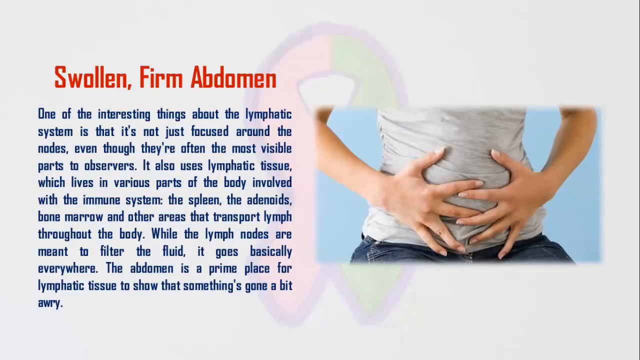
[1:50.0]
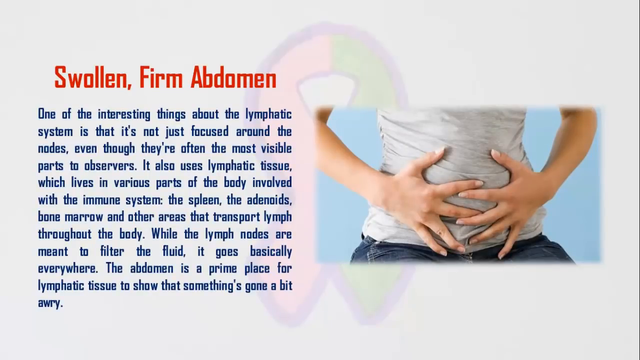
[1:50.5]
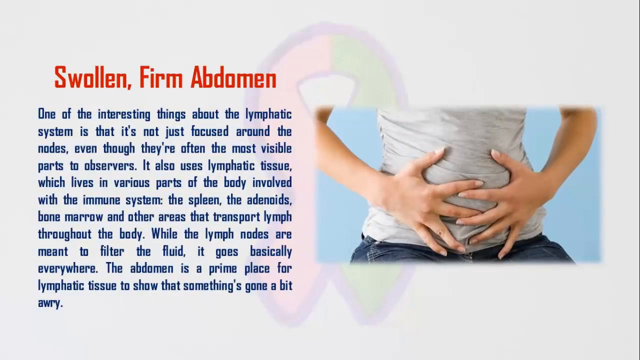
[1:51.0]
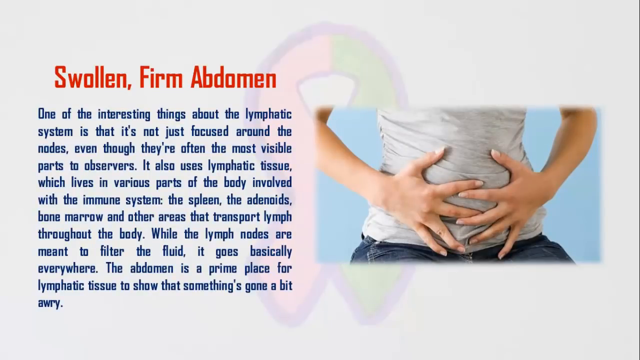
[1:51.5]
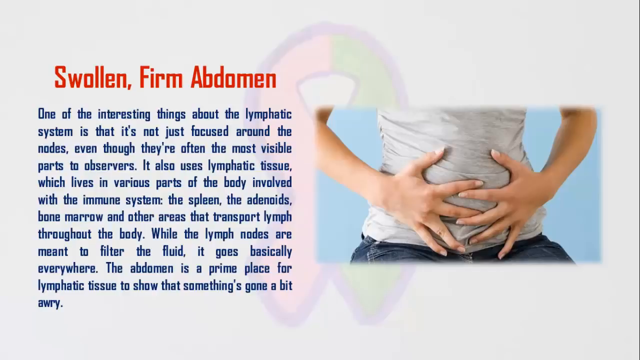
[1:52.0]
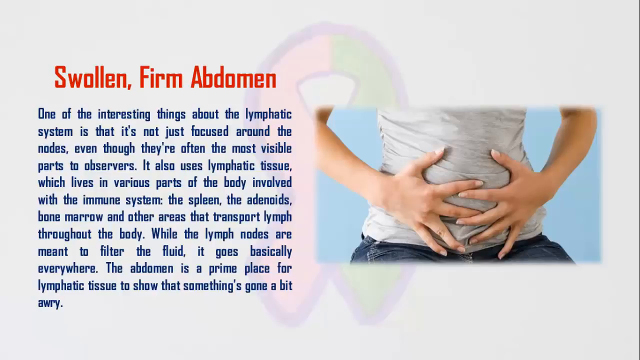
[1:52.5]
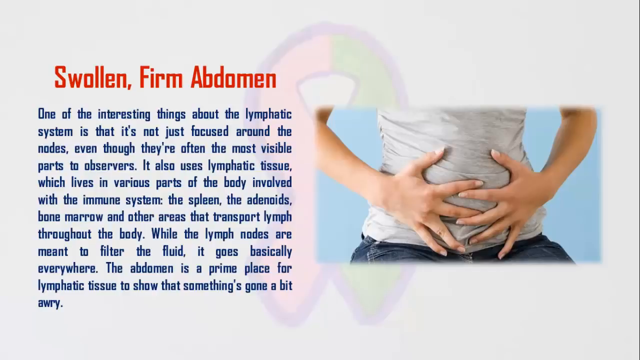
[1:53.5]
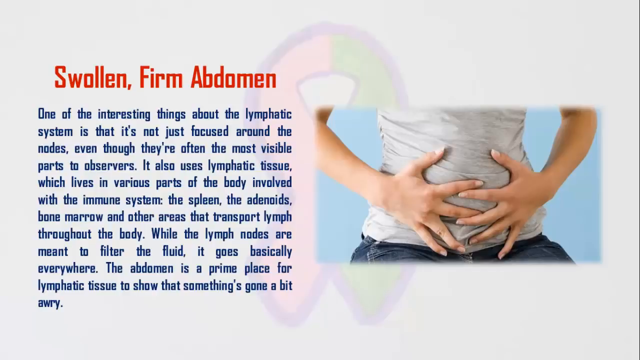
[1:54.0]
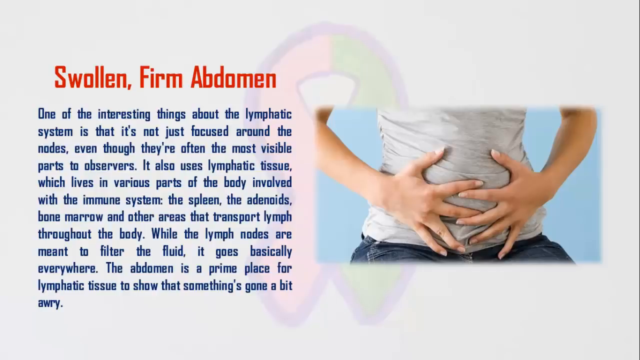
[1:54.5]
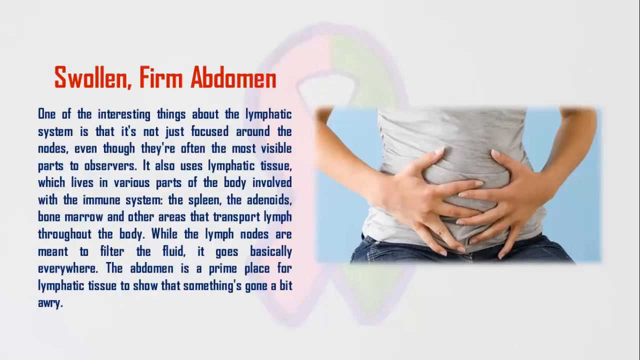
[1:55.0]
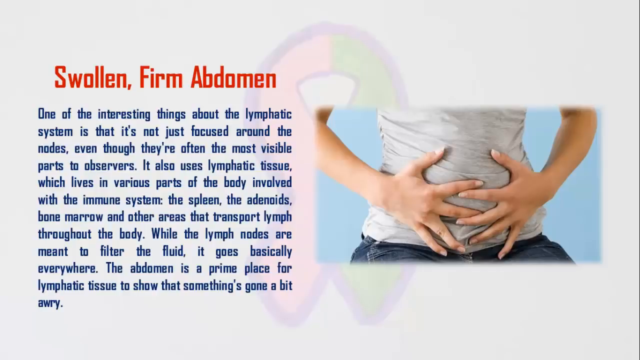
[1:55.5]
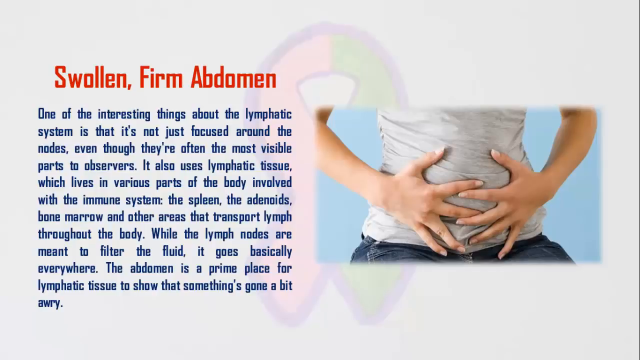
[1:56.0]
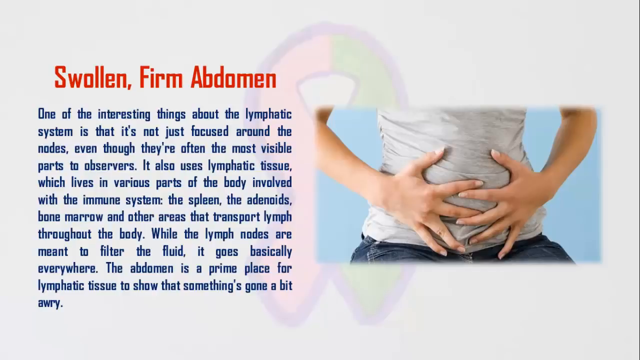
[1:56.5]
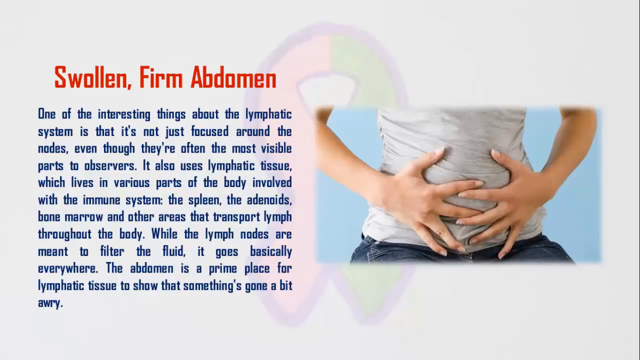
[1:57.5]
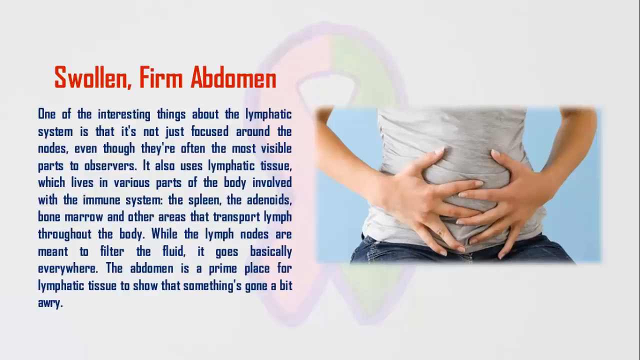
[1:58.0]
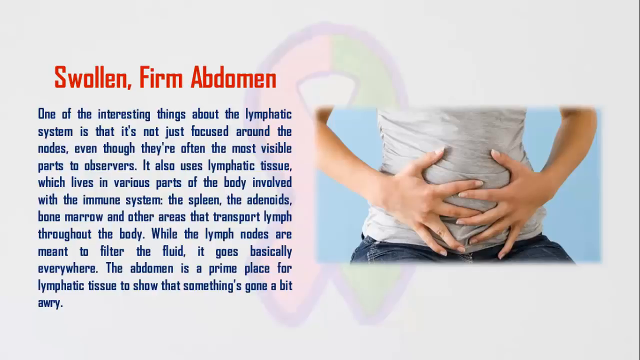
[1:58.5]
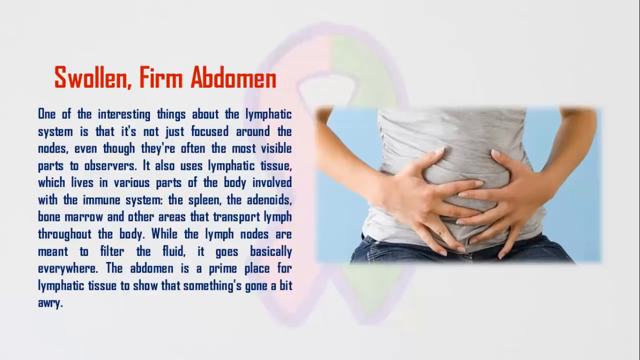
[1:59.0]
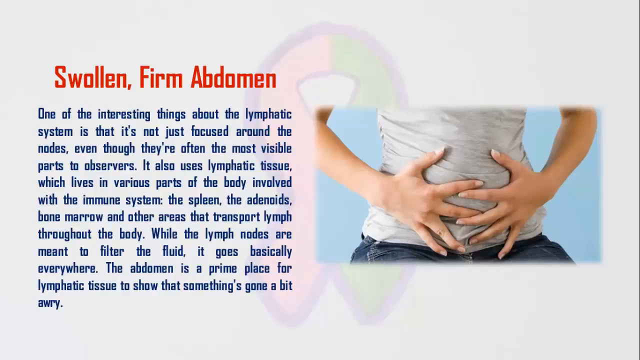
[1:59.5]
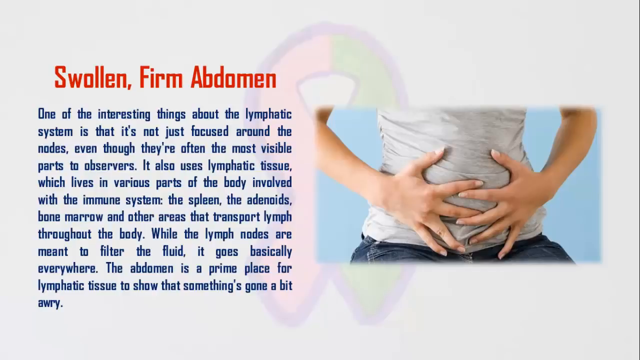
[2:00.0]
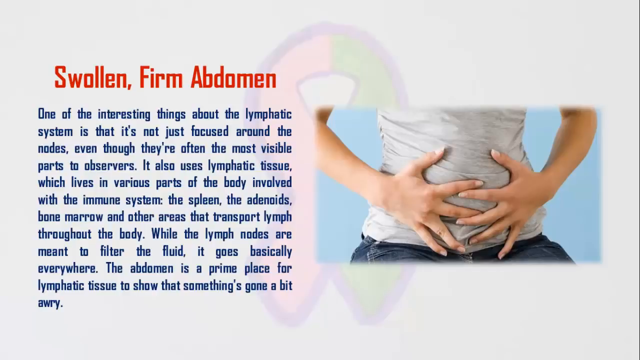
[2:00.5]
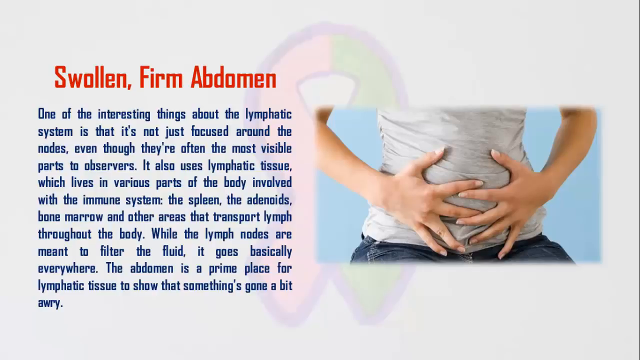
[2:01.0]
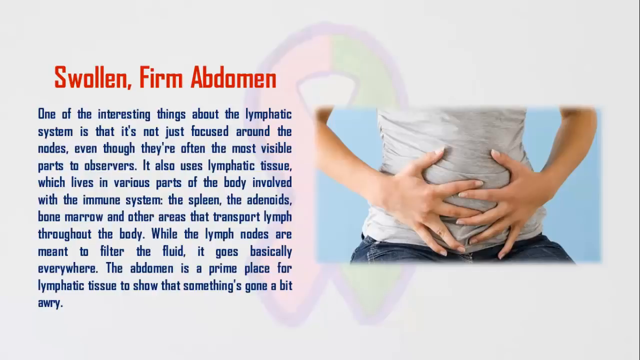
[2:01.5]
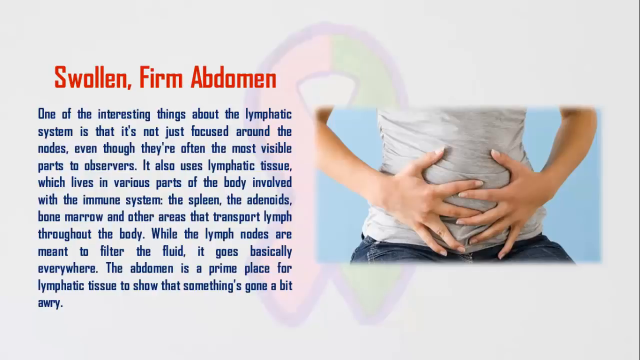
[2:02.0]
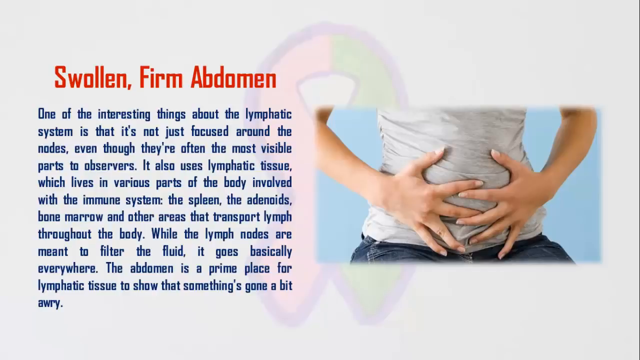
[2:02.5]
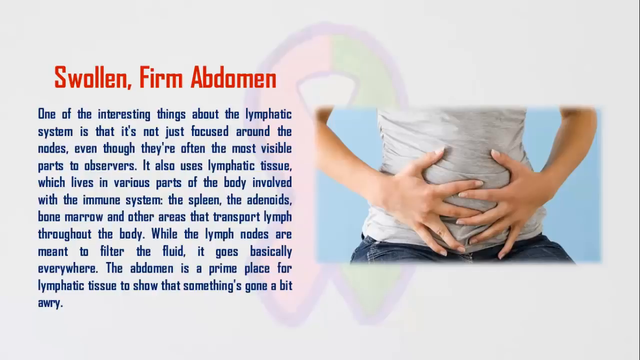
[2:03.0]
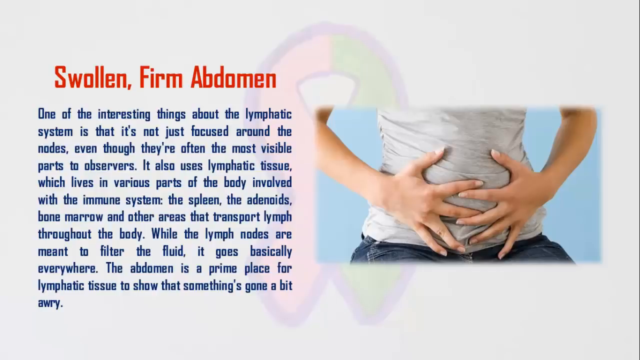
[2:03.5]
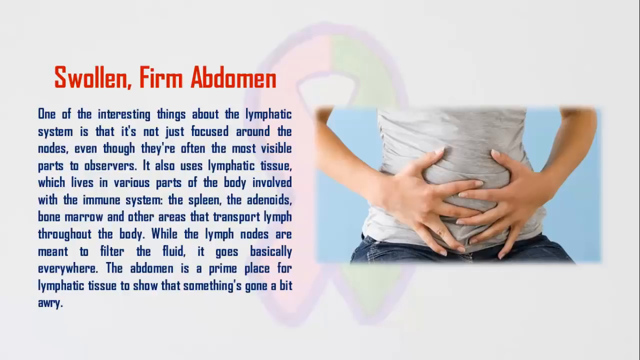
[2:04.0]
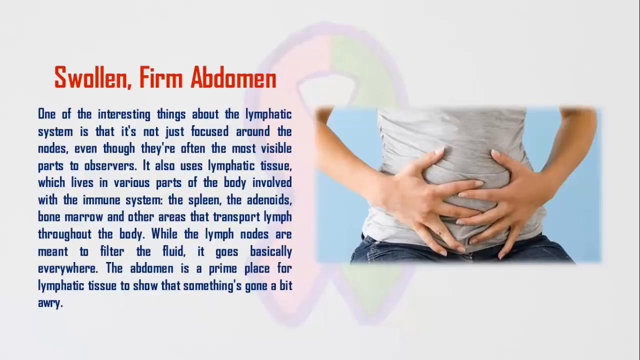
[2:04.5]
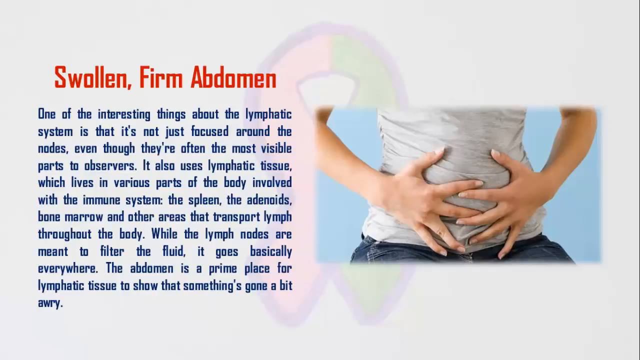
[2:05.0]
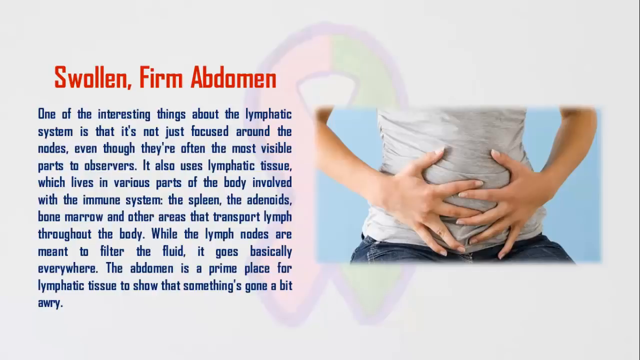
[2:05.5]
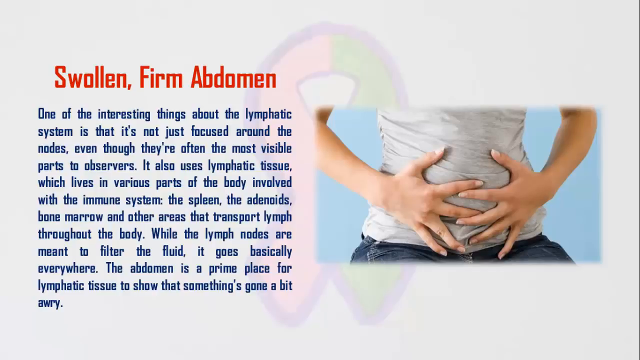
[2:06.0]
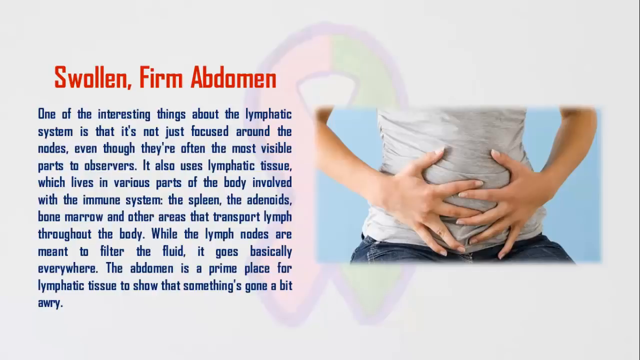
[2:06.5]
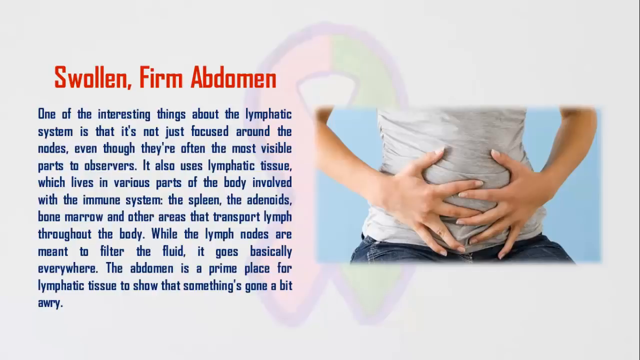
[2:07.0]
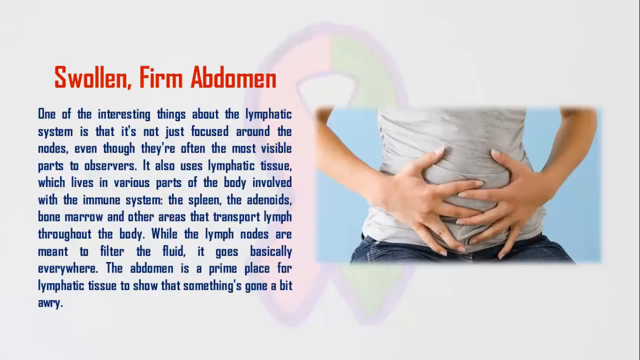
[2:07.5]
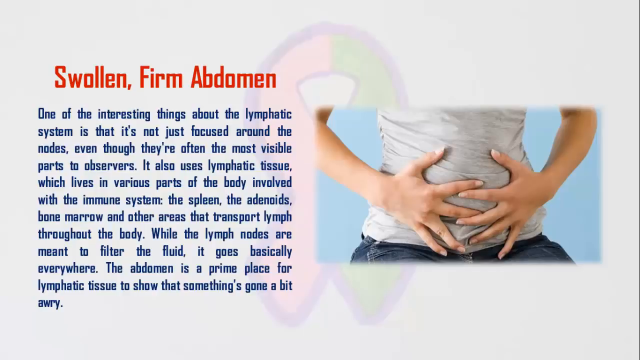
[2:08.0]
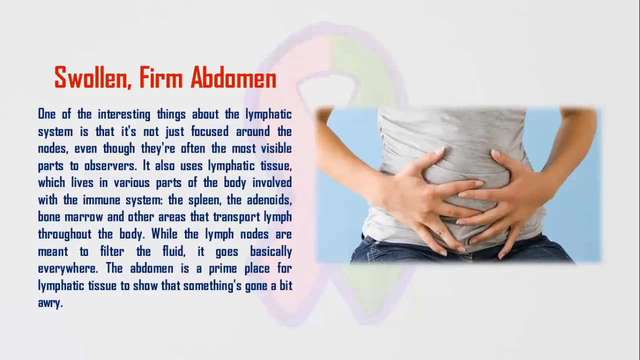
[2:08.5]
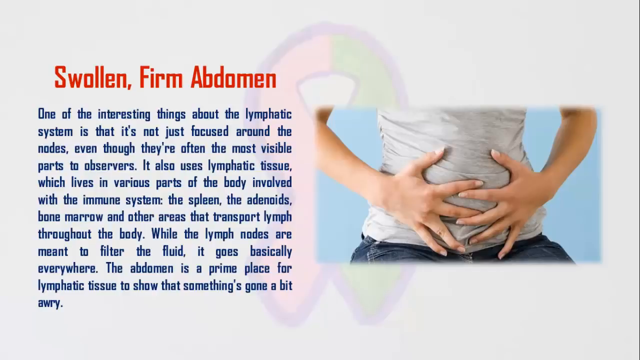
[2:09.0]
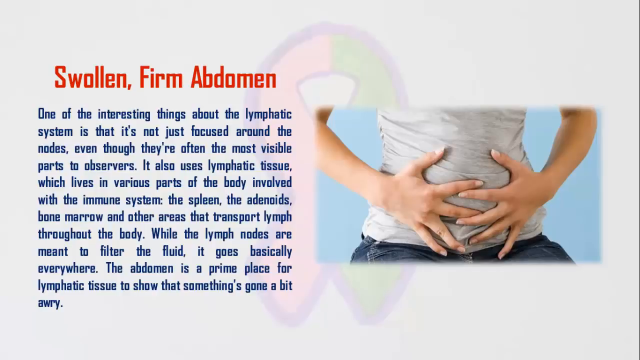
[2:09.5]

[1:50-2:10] The screen stays on the swollen firm abdomen slide. The background is light-colored with a black gradient at the bottom, and the ribbon is in the background, rounded and then crossed at the bottom, red on one side and black on the other. On the right side in the middle is the picture with a light blue background showing the midsection of a young lady in a wrinkled white shirt and blue jeans, both hands across her abdomen with fingers touching and spread completely out, holding her abdomen. To the left, large red letters read "swollen firm abdomen," with blue print underneath reading: "One of the interesting things about the lymphatic system is that it's not just focused around the nodes, even though they're often the most visible parts to observers. It also uses lymphatic tissues, which live in various parts of the body involved with the immune system, the spleen, the adenoids, bone marrow, and other areas that transport lymph throughout the body. While the lymph nodes are meant to filter the fluid, it goes basically everywhere. The abdomen is a prime place for lymphatic tissue to show that something's gone a bit awry."